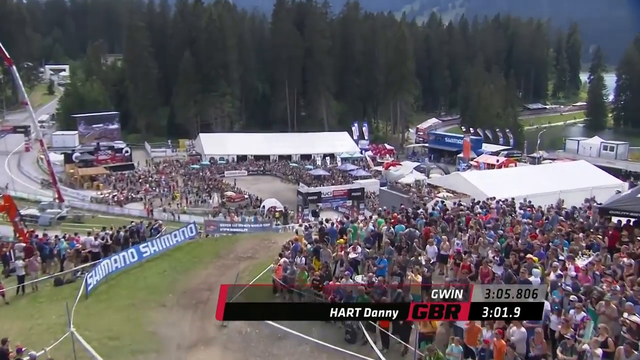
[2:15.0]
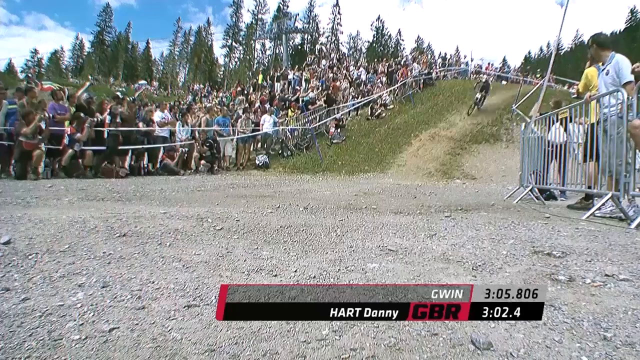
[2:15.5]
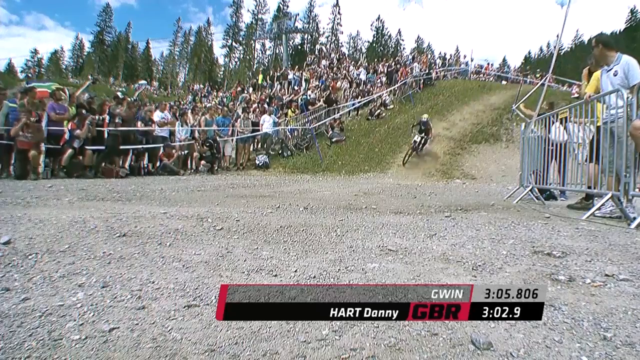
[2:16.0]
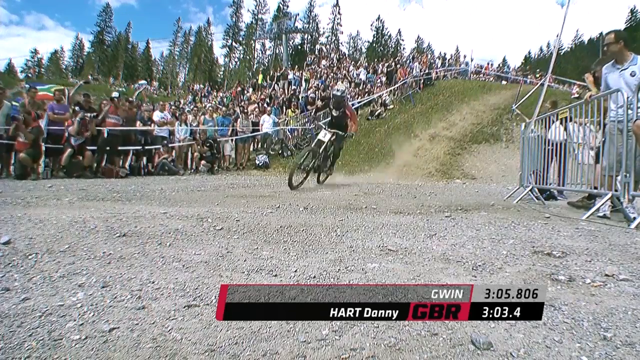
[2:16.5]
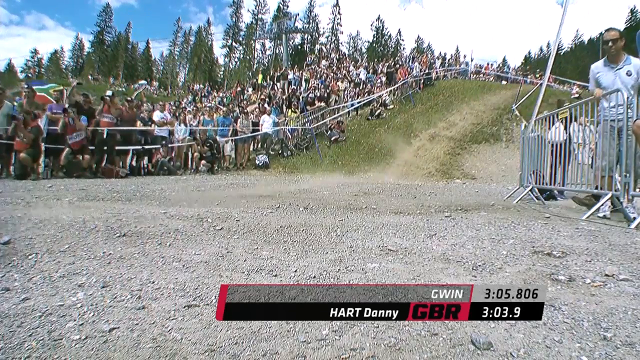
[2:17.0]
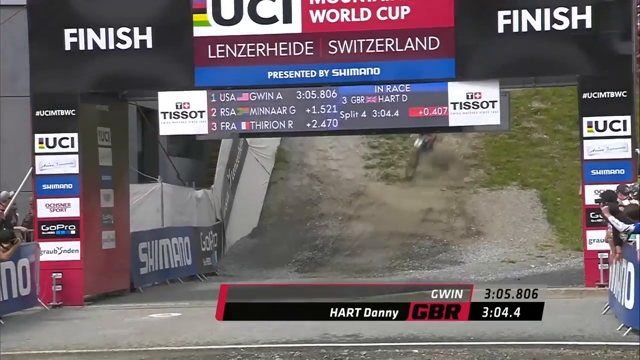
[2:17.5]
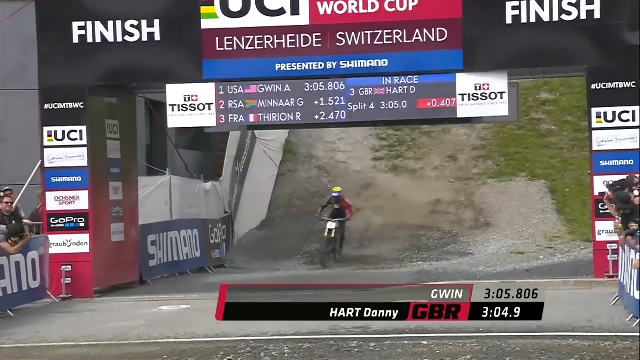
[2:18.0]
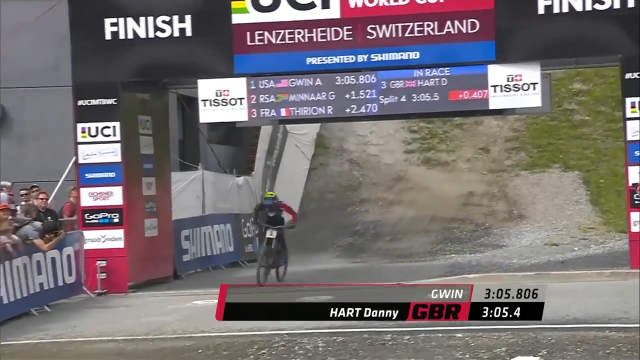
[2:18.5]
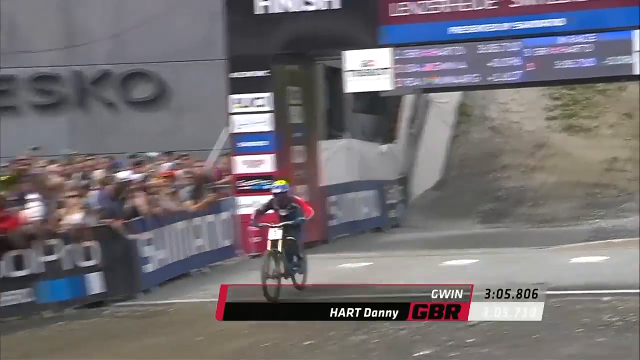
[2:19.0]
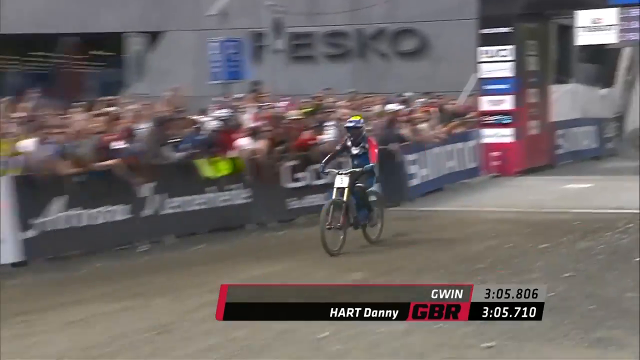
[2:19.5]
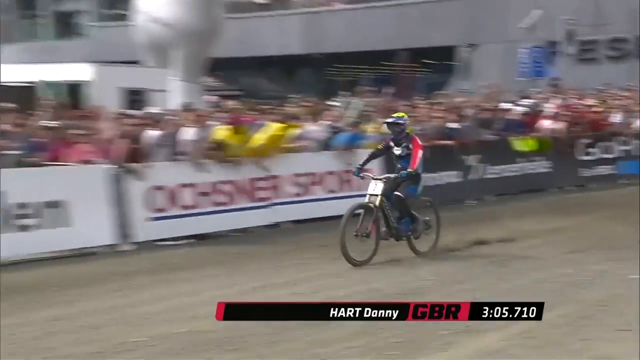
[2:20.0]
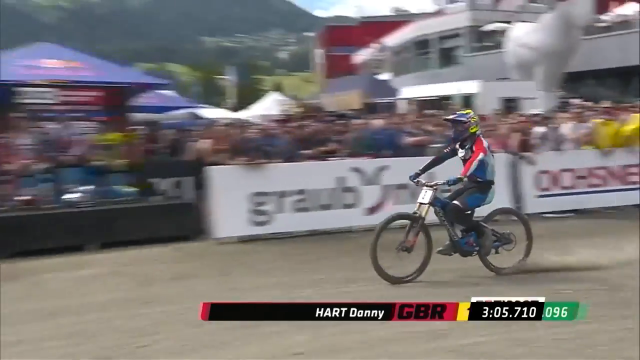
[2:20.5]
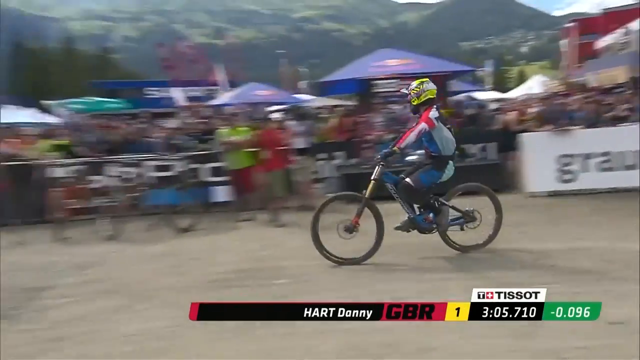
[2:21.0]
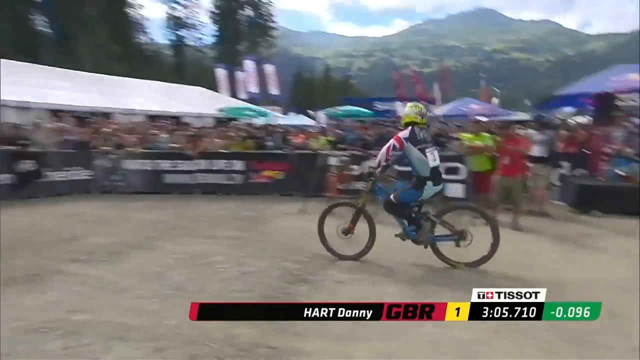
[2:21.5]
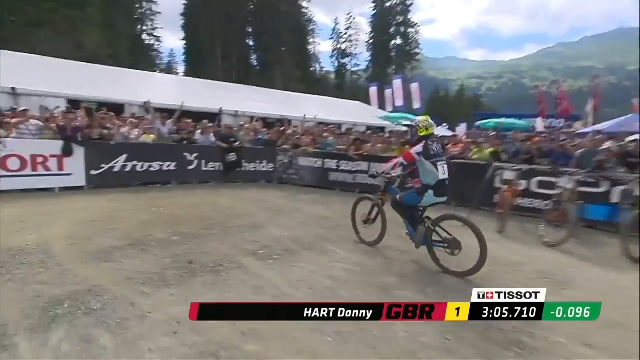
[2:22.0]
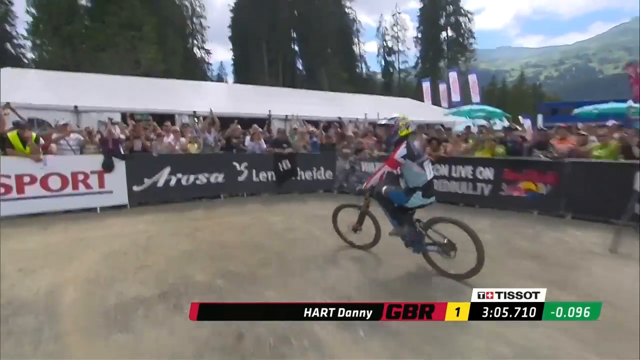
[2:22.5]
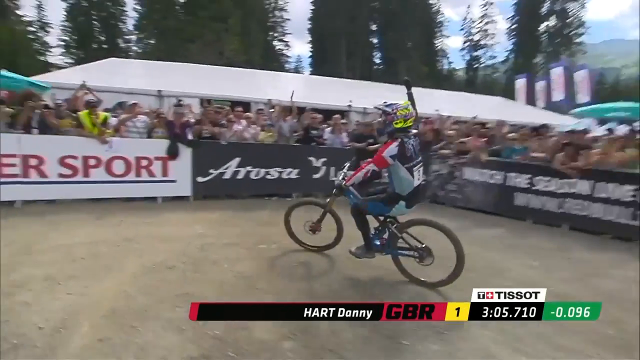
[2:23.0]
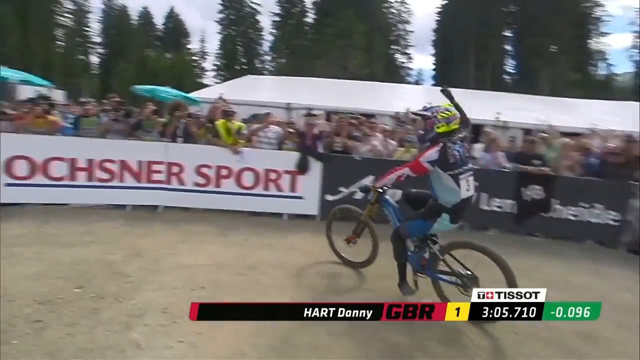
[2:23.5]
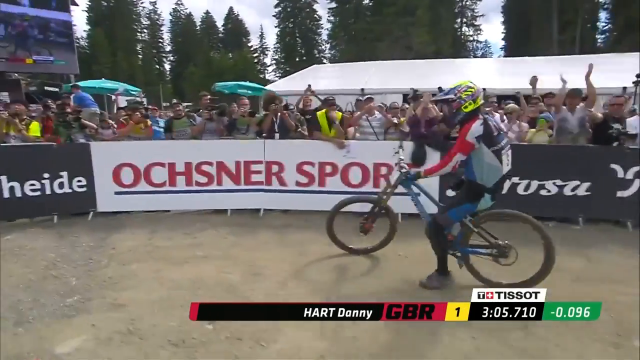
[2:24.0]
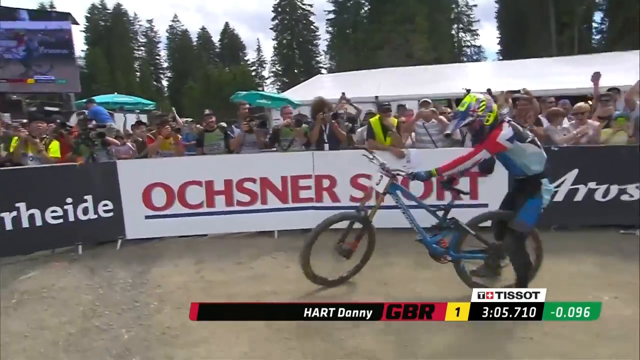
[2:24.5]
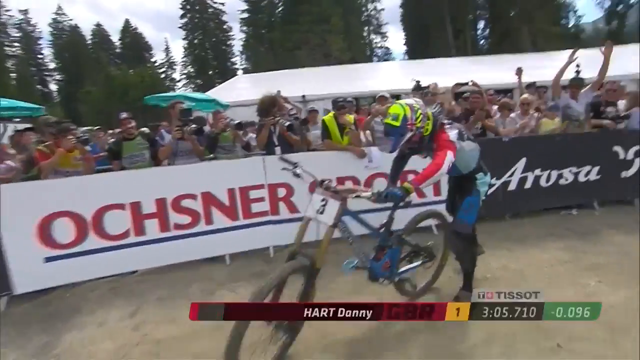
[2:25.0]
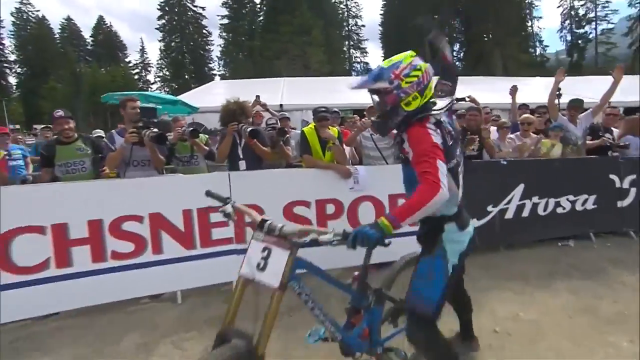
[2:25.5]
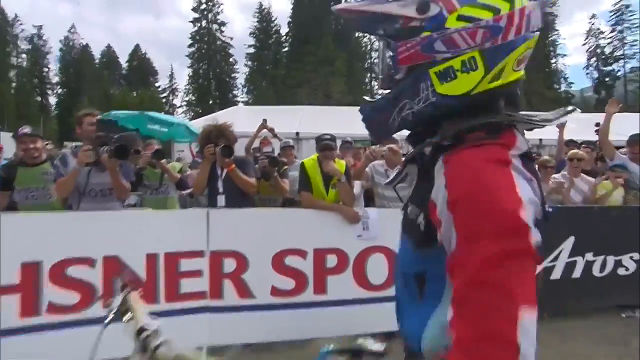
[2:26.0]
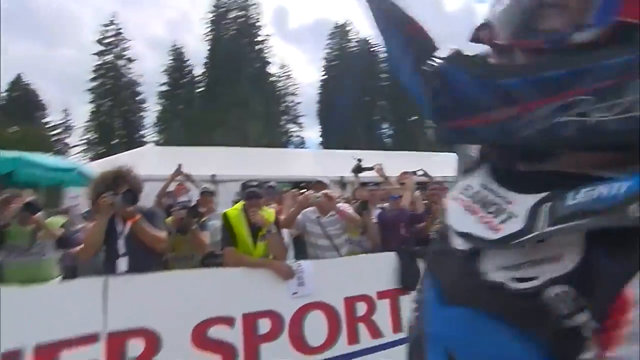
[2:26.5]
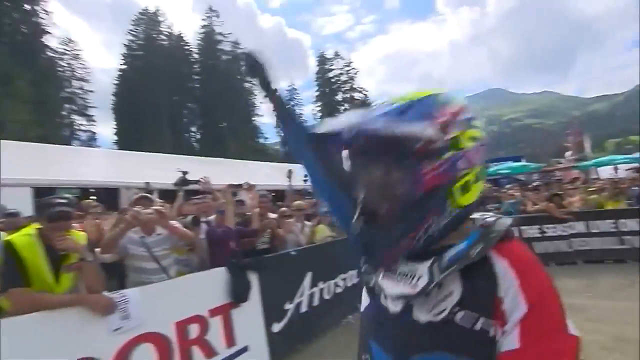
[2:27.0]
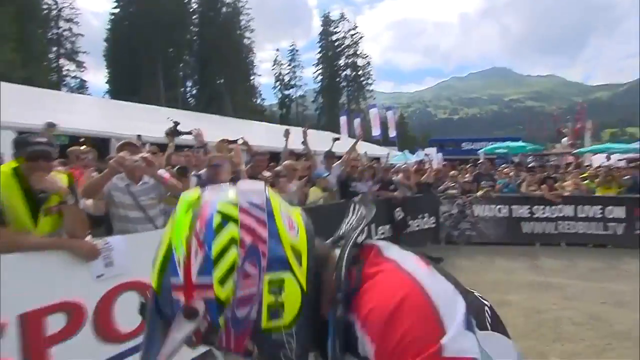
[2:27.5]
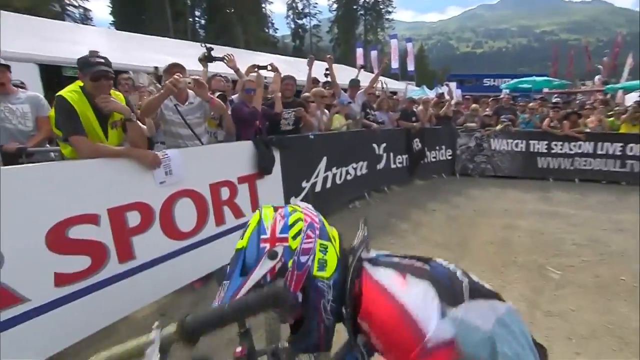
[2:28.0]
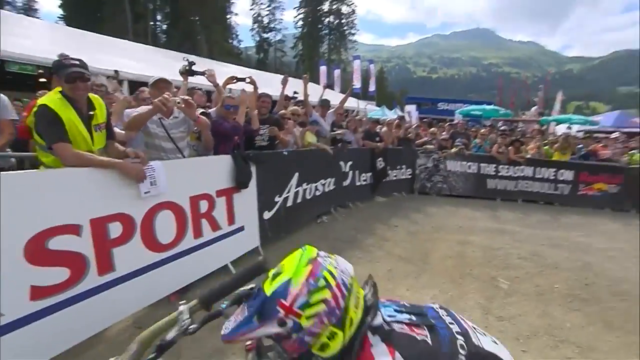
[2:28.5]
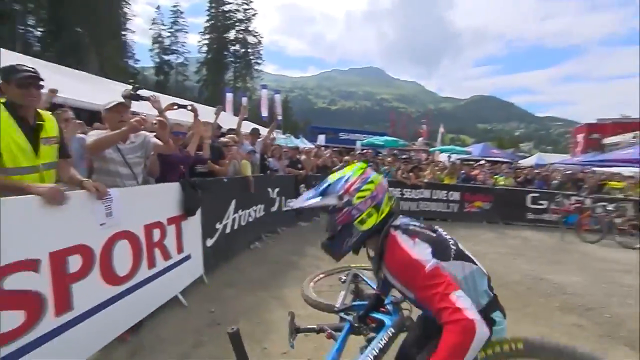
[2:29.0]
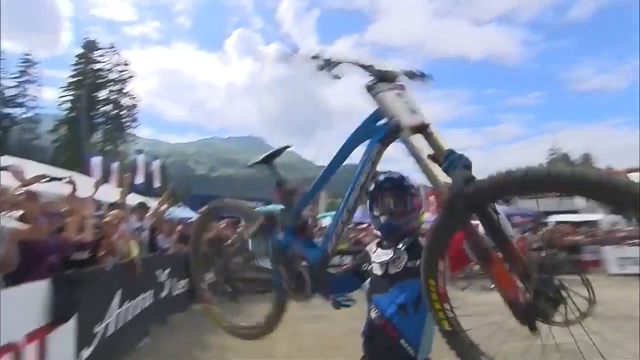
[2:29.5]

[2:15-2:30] A close-up shows Hart coming over the last hill. He comes down one more quick hill that opens up into the finish line, which has an overpass and a scoreboard with his name. He comes into a large area surrounded by people and banners, slows down, pumps his fist in the air, gets off the bike, keeps pumping his fist triumphantly, and then raises his bike in the air.